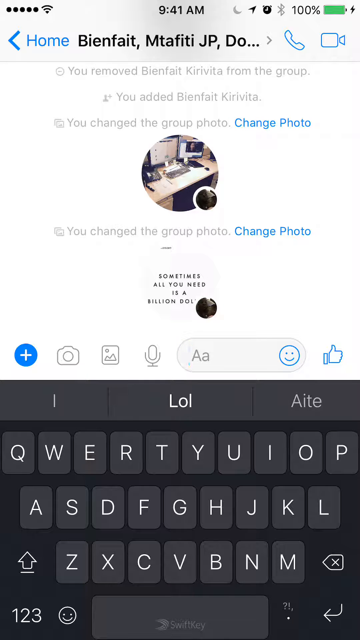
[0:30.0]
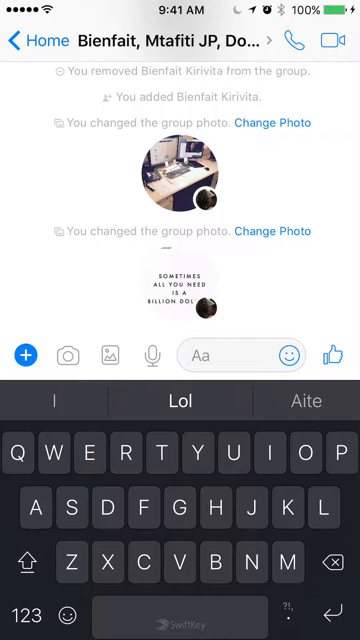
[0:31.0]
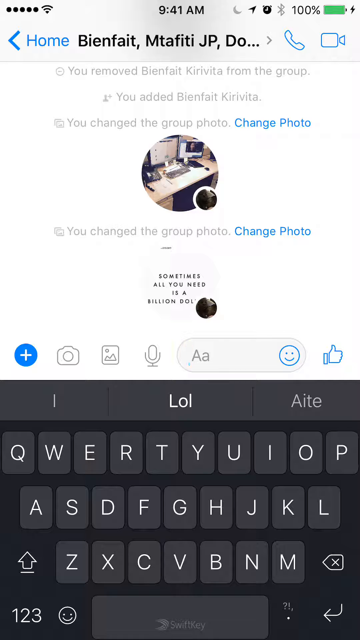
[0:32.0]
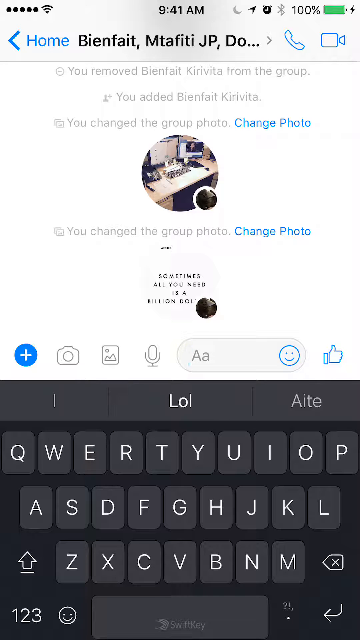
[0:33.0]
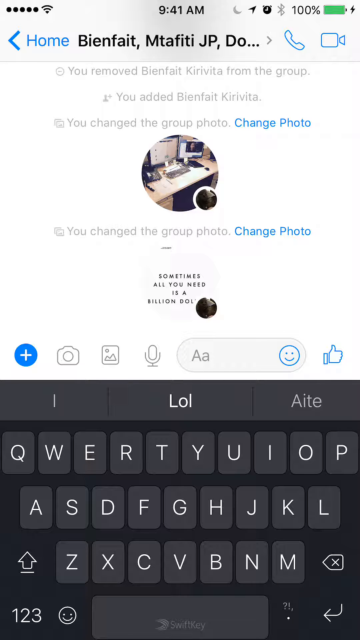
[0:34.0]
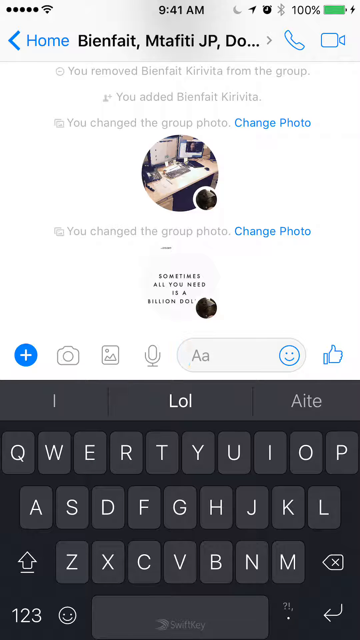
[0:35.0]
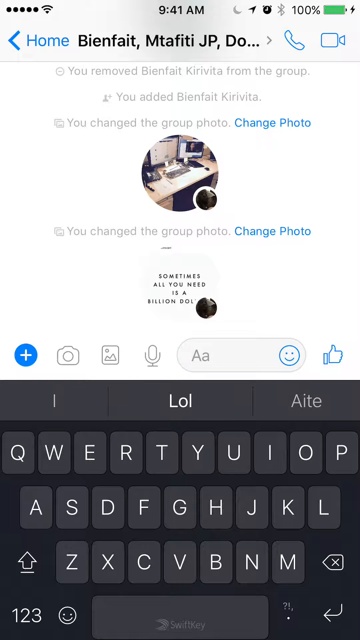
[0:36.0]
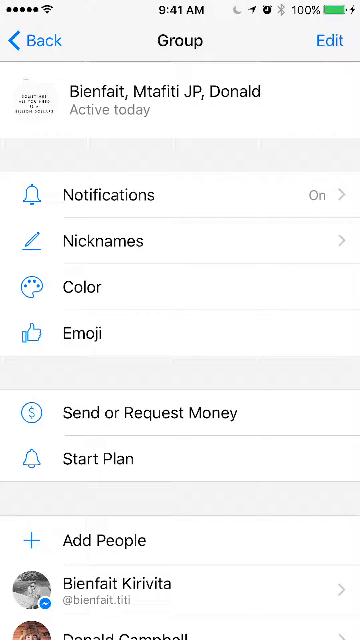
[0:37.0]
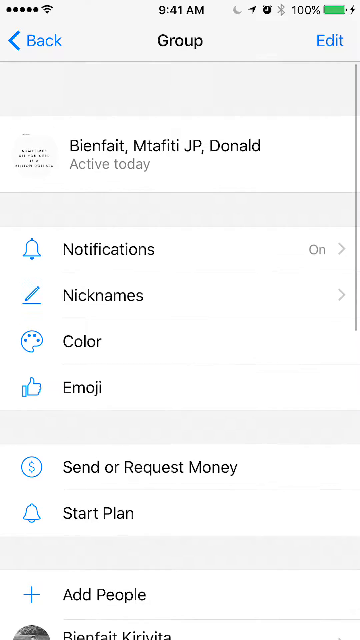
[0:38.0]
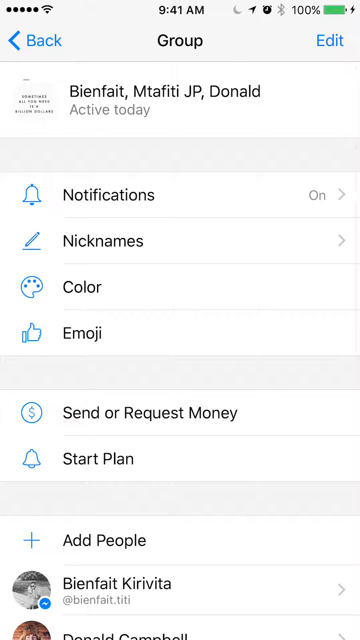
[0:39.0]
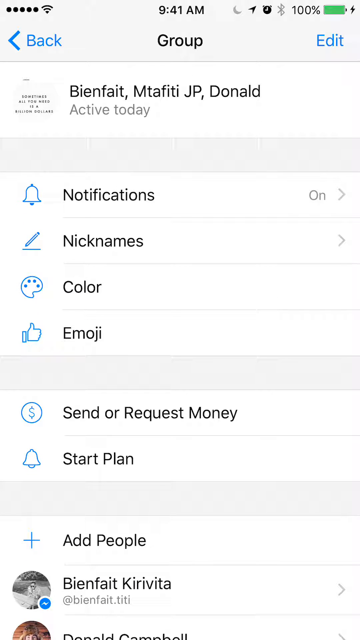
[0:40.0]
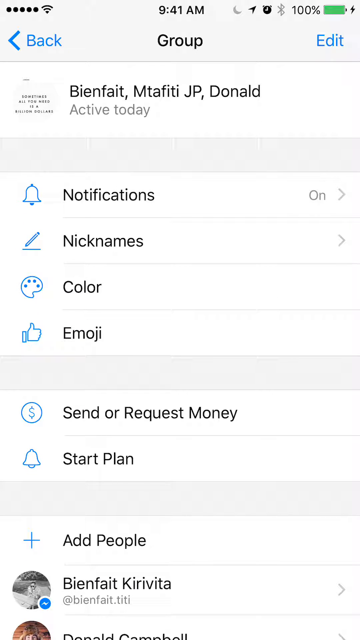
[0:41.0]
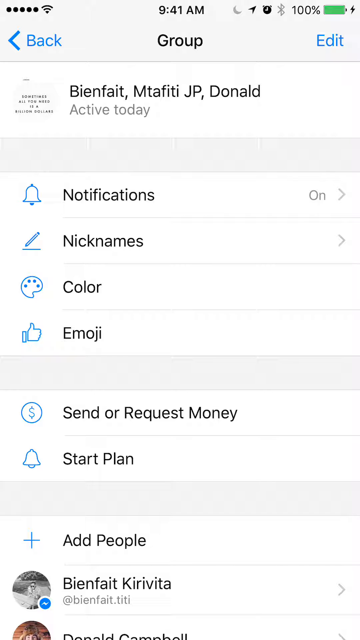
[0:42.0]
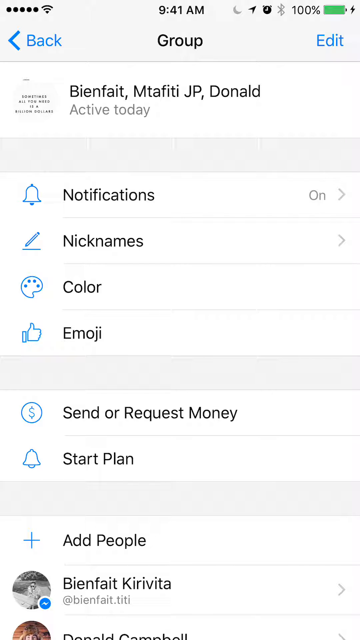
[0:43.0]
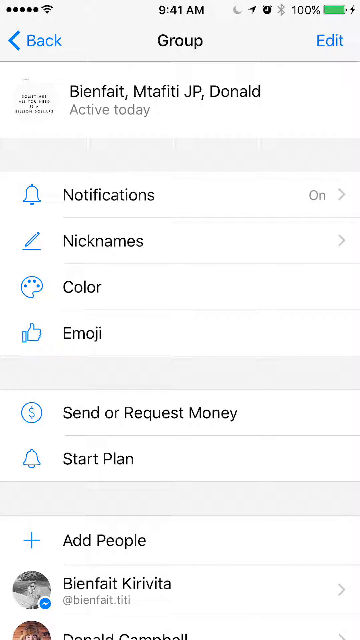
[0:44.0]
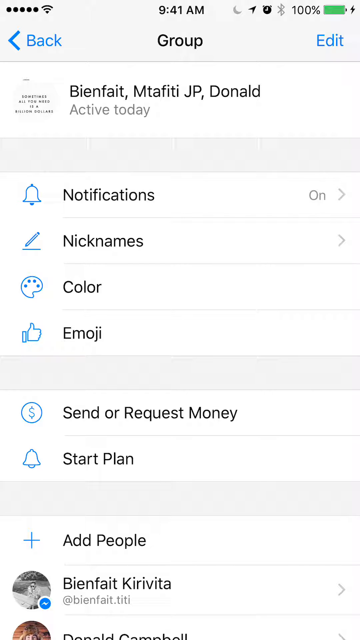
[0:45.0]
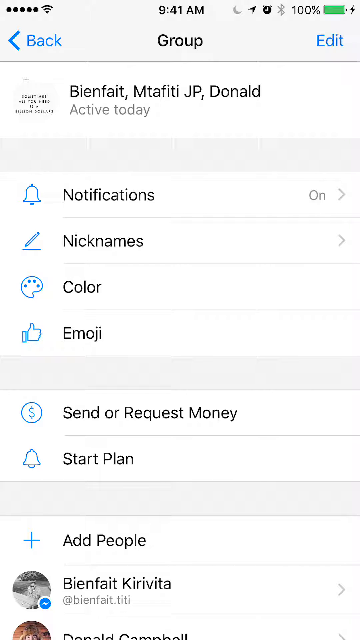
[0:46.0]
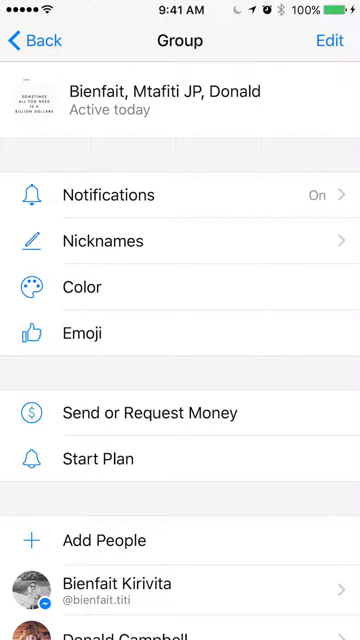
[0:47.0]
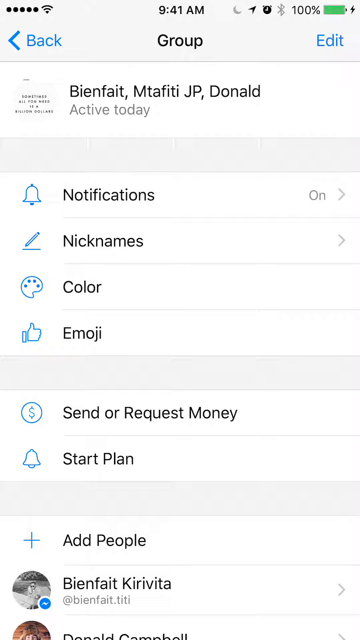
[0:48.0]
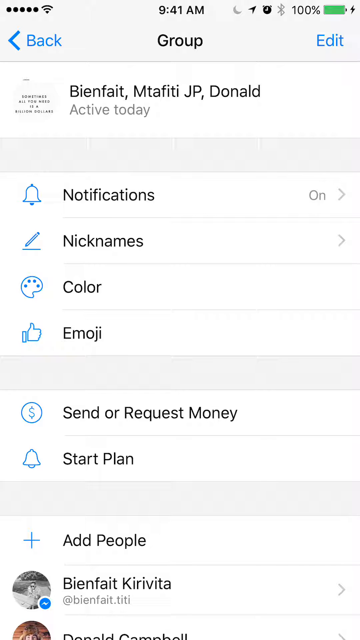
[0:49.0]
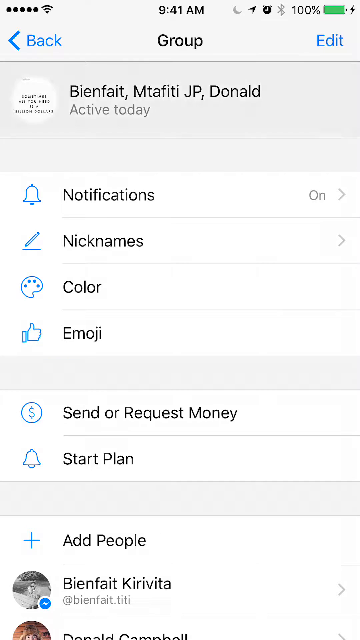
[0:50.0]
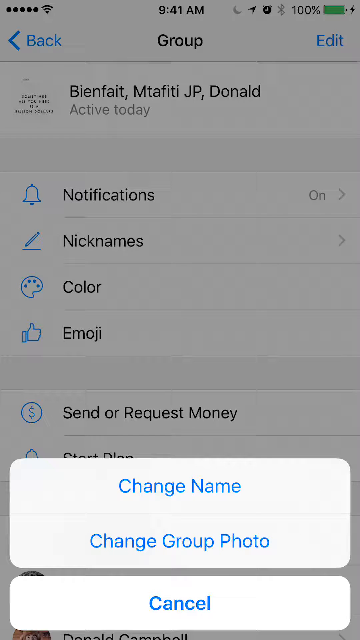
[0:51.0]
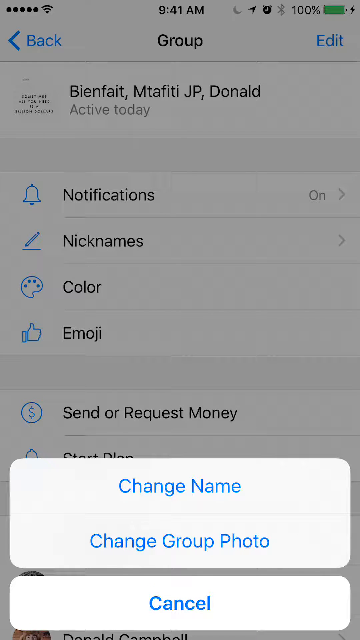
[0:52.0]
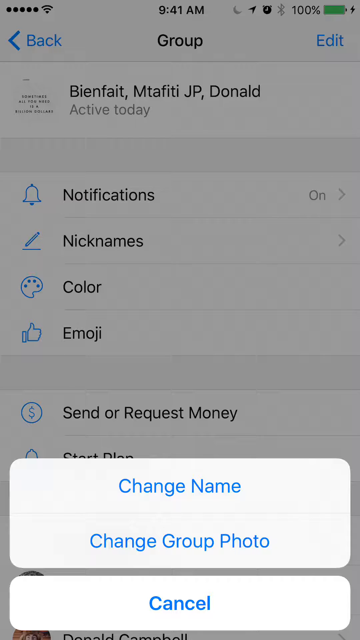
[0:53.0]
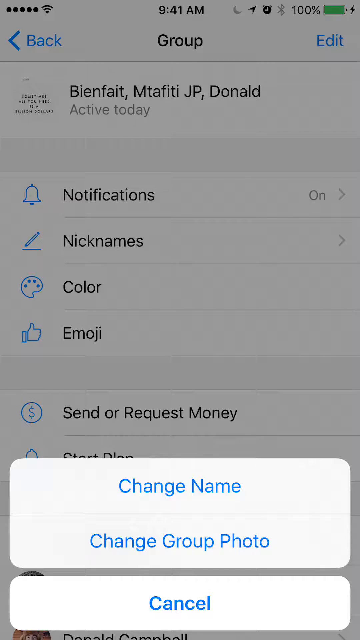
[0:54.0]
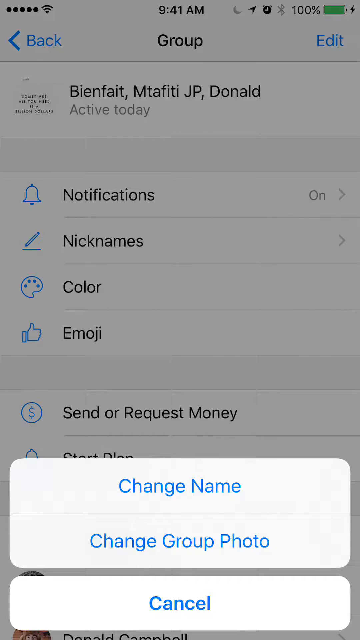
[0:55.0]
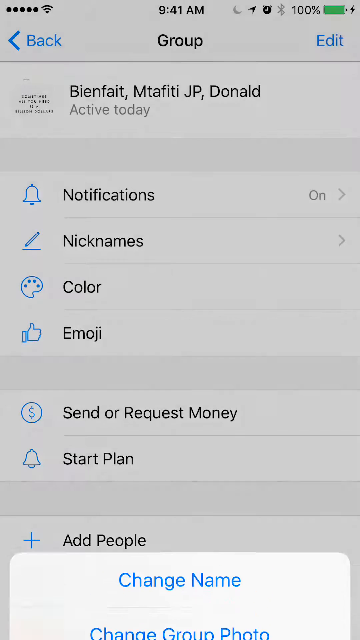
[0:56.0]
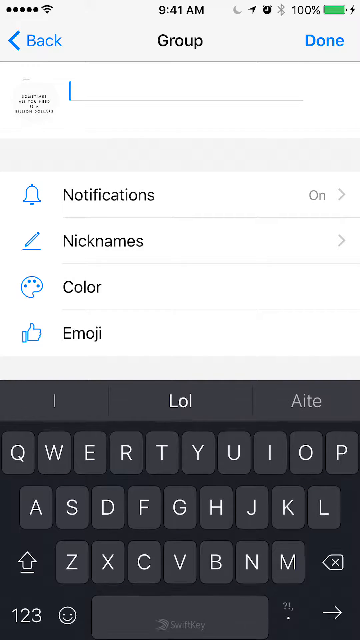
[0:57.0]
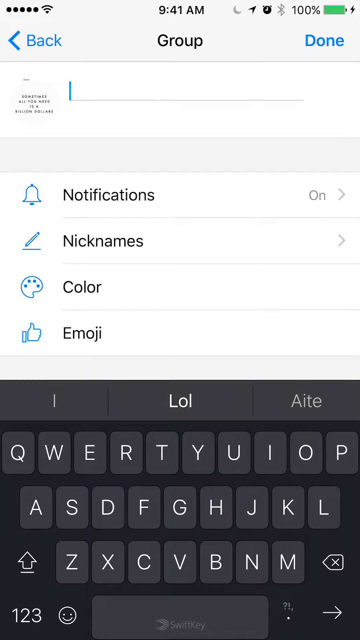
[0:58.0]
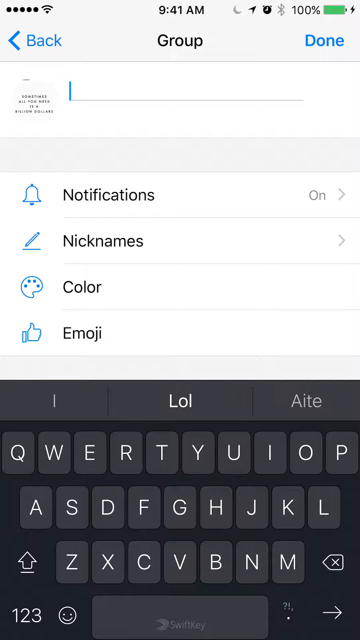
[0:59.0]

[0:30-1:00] The WhatsApp profile is shown with an option to change photos. On the profile there are options for notification, nickname, color and emoji, along with options to change the name and the group photo. A cursor is at the top left of the screen, where the user name of the group can be edited.